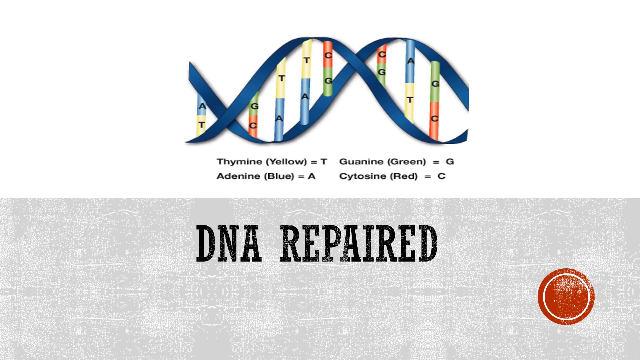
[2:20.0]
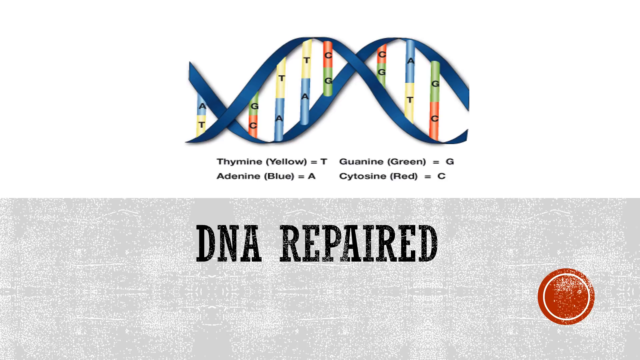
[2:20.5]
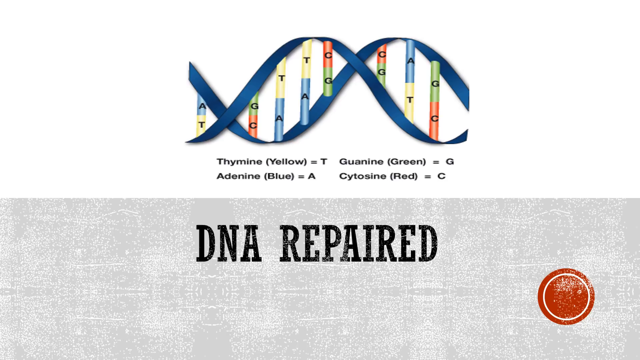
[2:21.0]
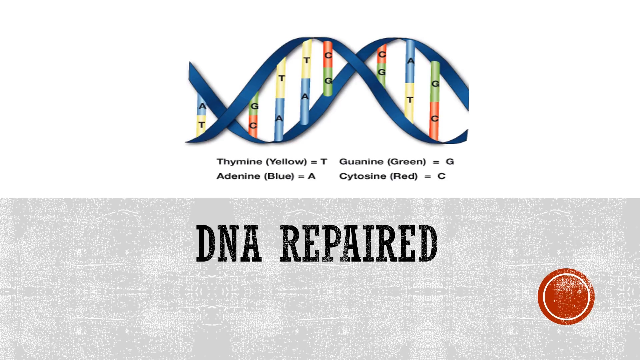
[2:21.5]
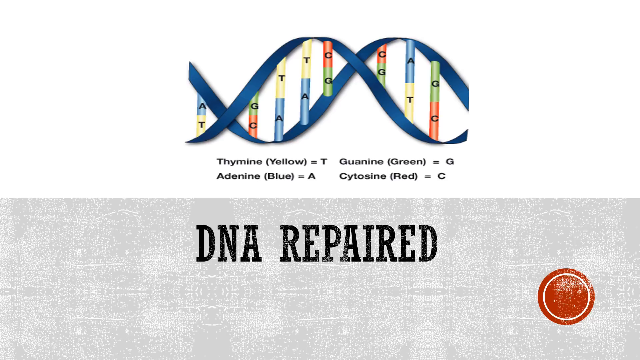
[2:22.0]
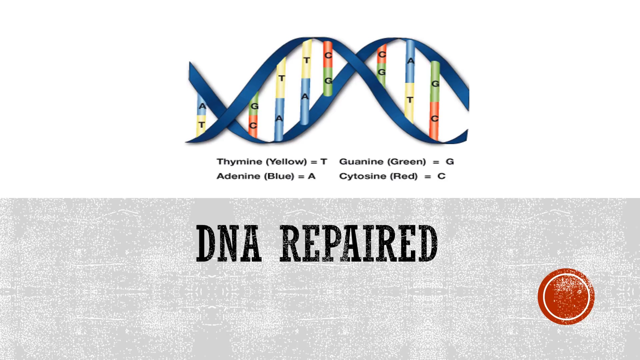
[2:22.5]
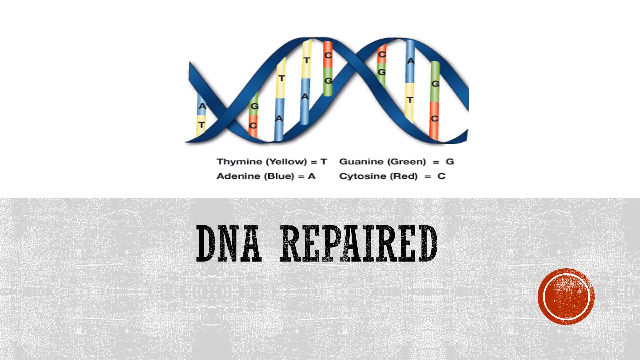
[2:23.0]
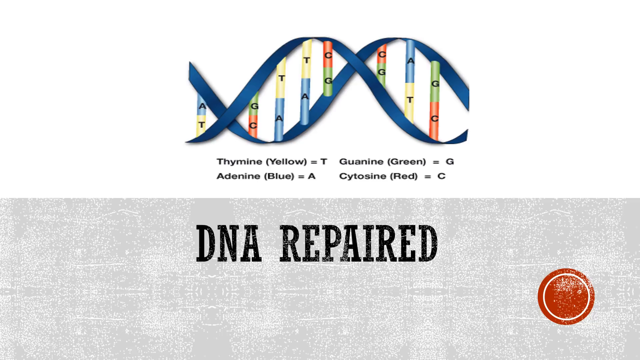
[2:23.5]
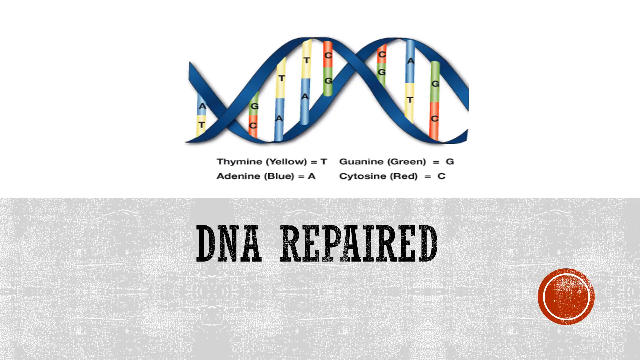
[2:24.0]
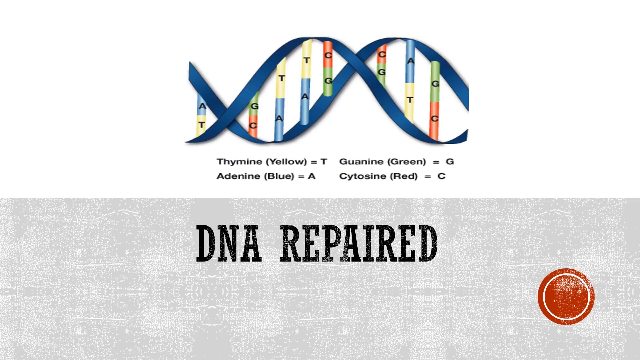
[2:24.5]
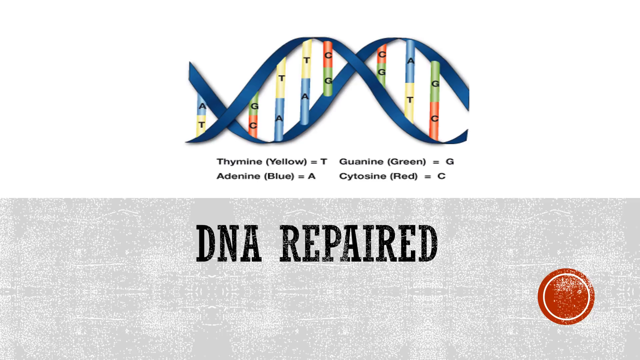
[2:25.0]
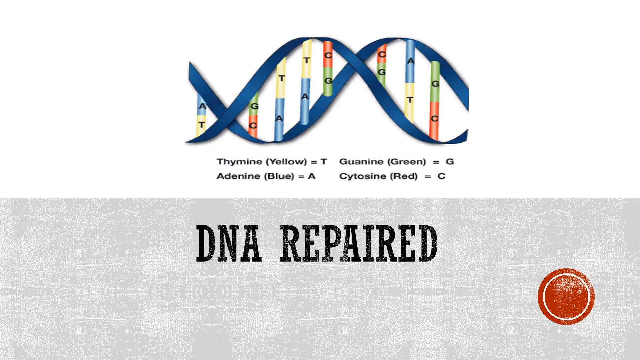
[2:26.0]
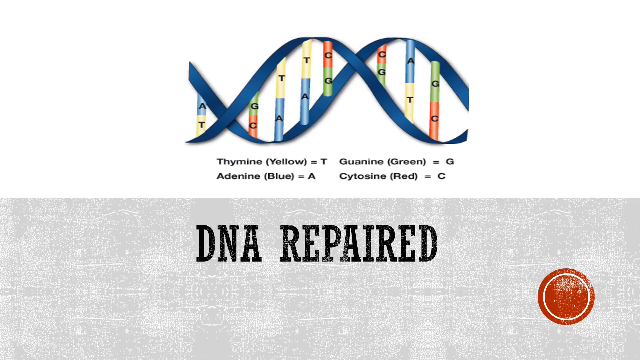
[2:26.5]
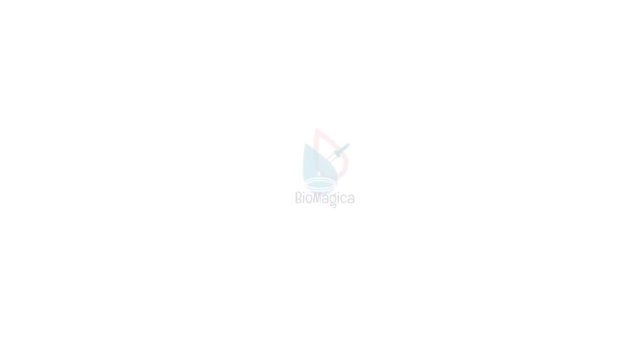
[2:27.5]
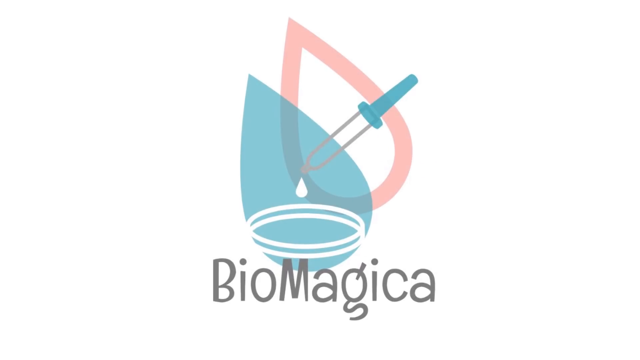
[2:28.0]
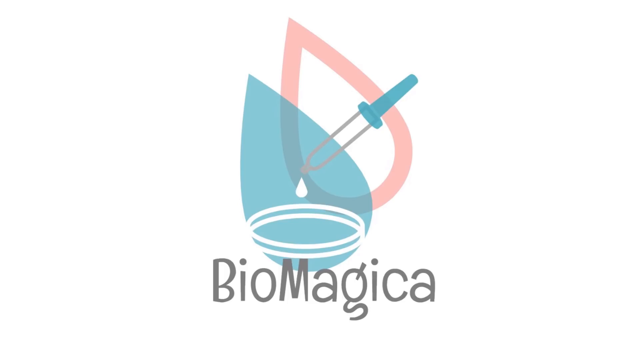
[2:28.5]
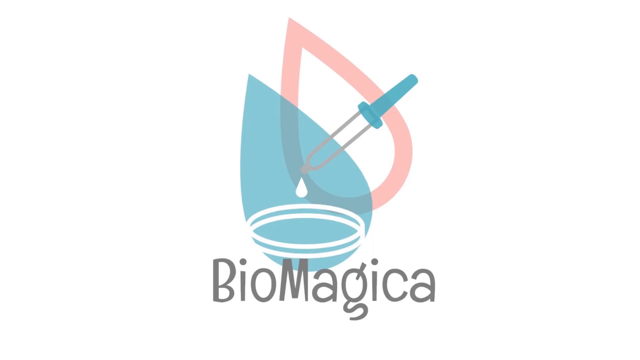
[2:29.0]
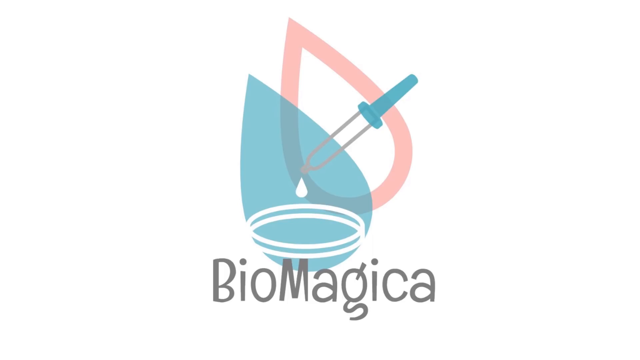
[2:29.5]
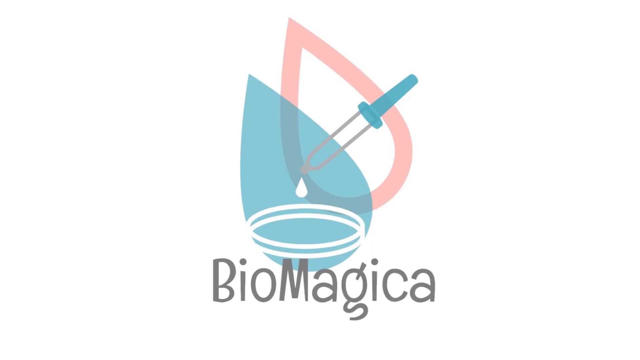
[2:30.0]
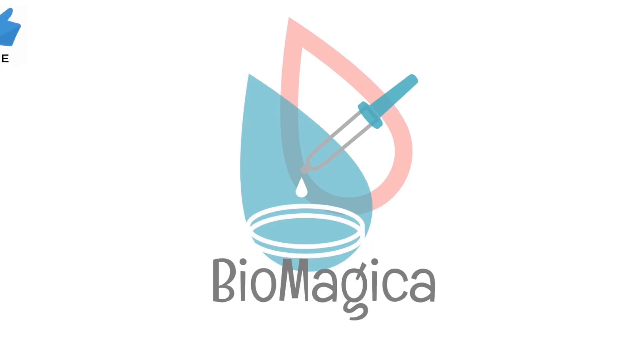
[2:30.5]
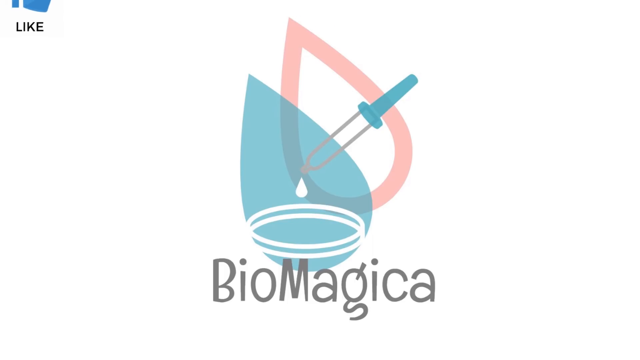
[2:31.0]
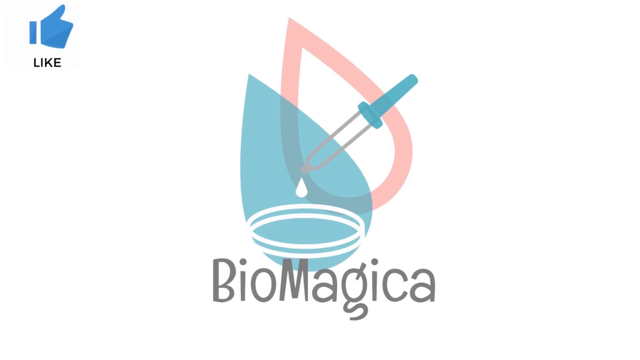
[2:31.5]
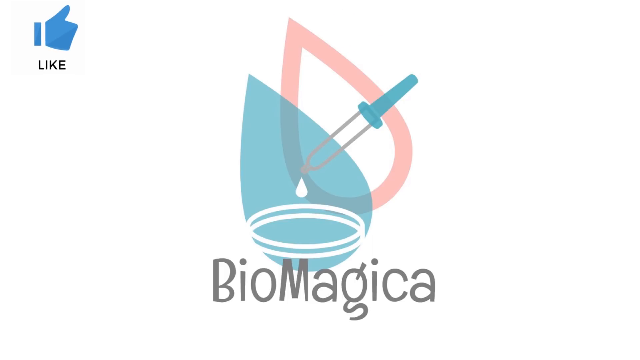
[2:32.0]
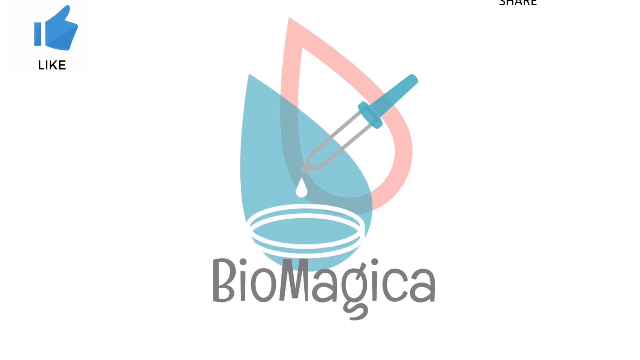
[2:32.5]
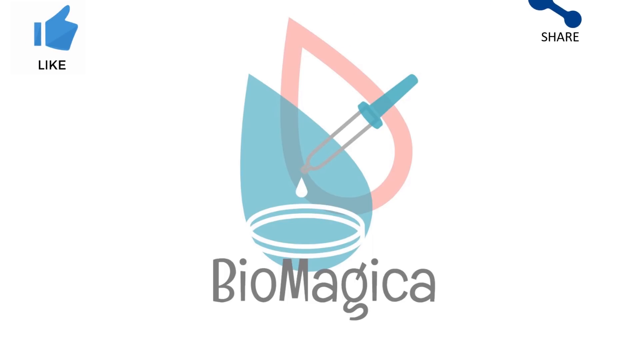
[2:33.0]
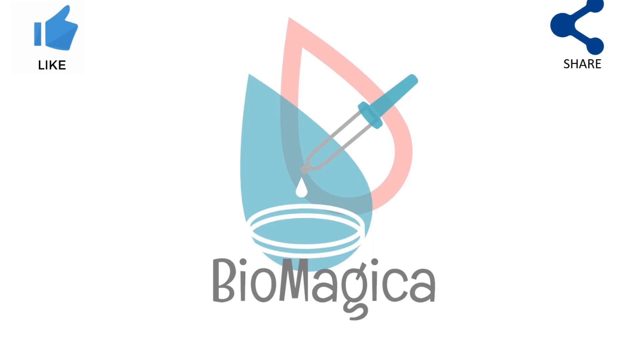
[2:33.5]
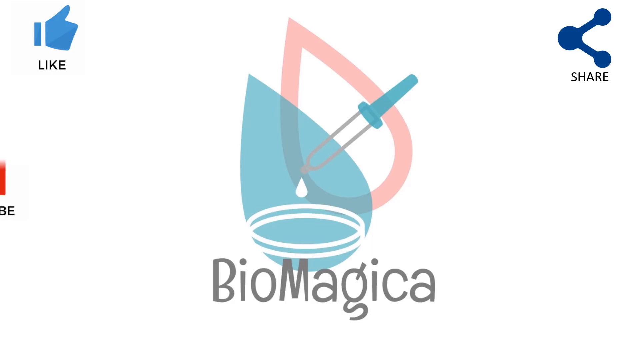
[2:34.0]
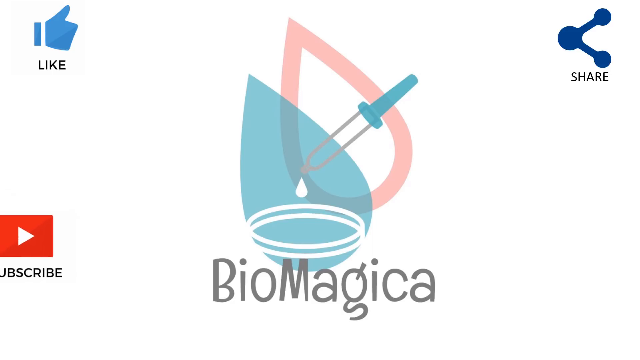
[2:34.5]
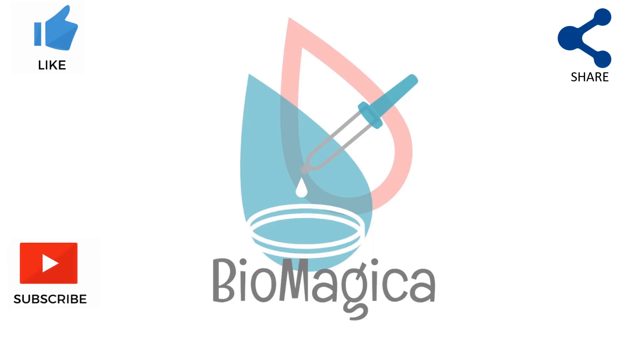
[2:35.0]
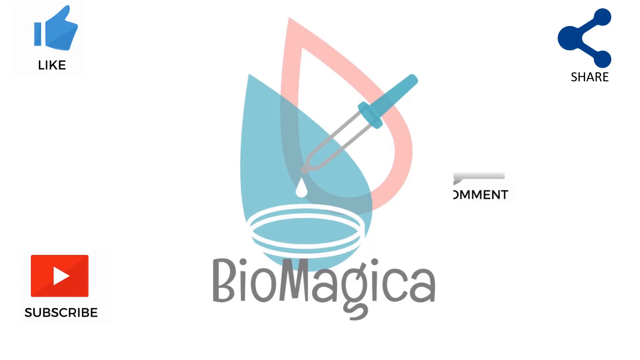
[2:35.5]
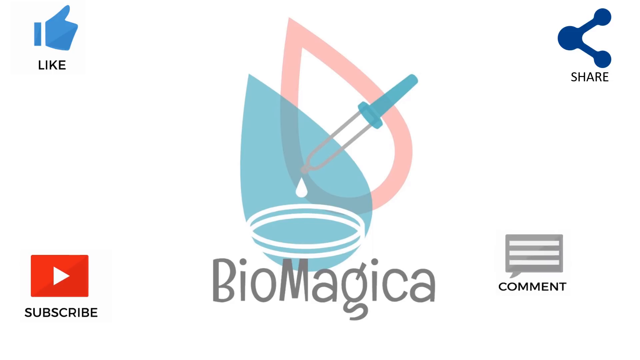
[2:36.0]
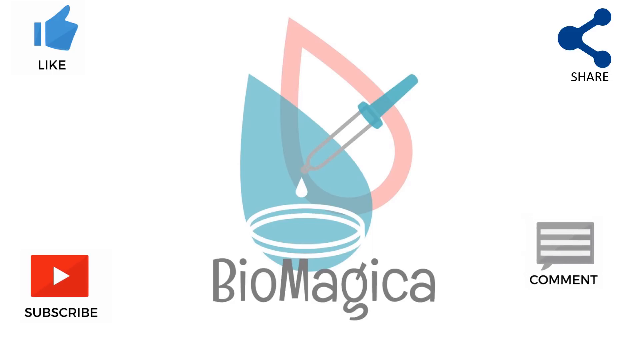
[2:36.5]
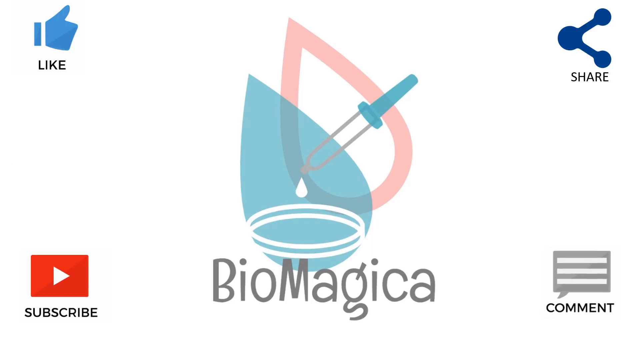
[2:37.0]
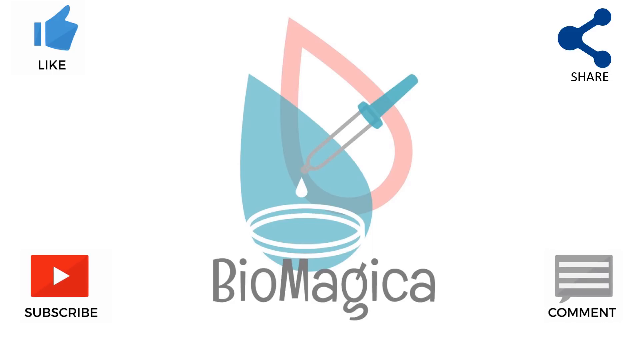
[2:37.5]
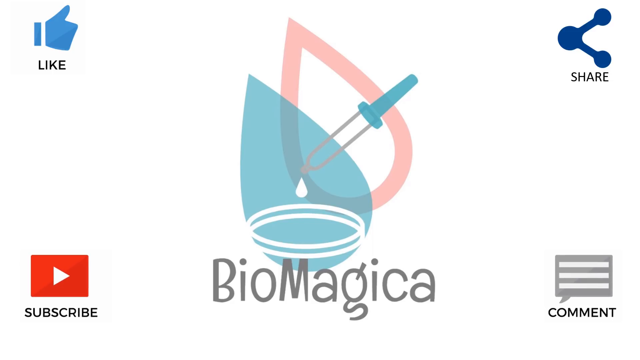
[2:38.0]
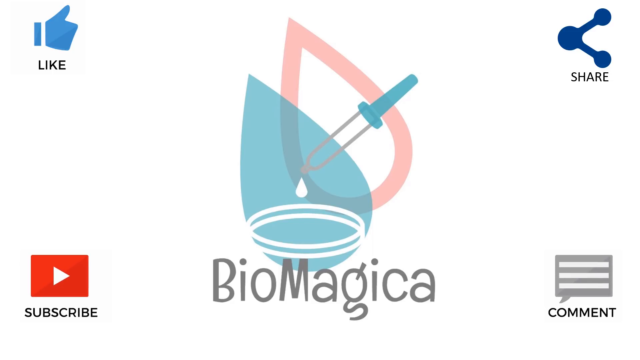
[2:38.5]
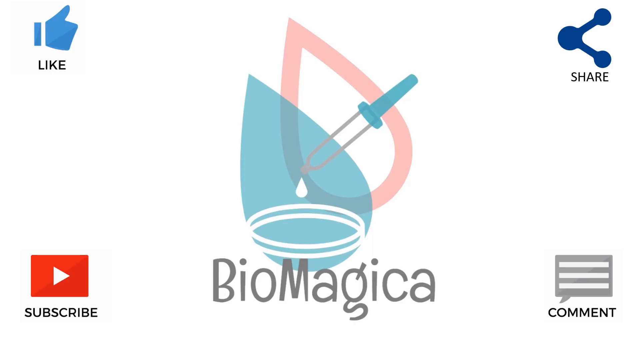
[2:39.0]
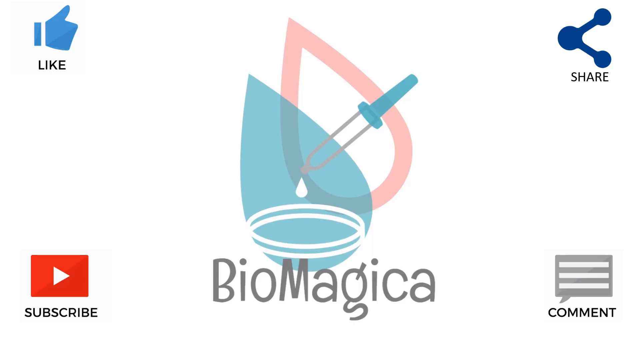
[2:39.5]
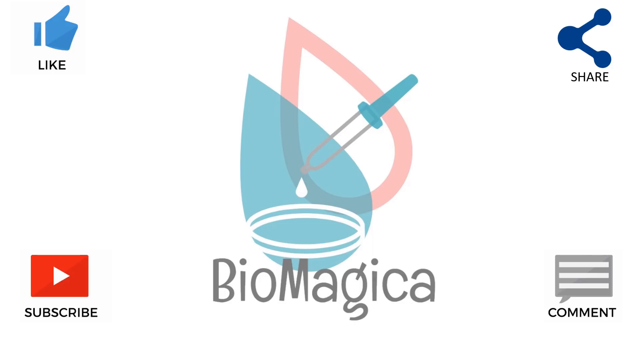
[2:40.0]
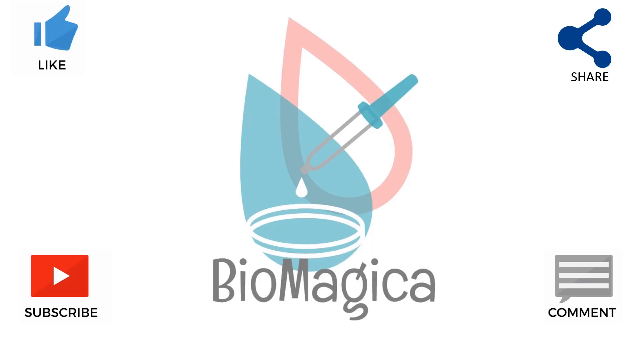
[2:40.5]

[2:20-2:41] A DNA sequence is shown in the cartoon diagram. A line appears, and symbols are placed at the four corners. The symbols are on a white background.